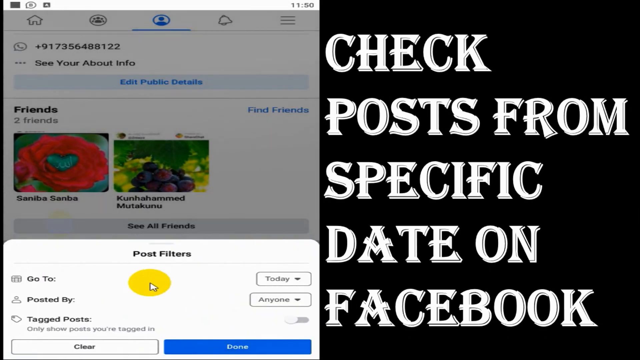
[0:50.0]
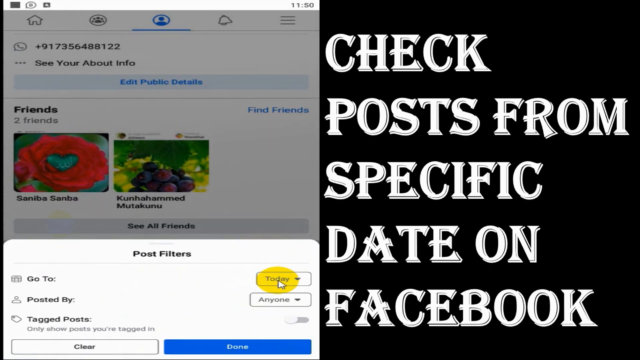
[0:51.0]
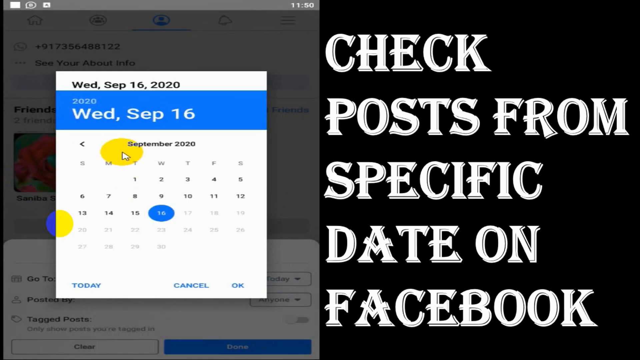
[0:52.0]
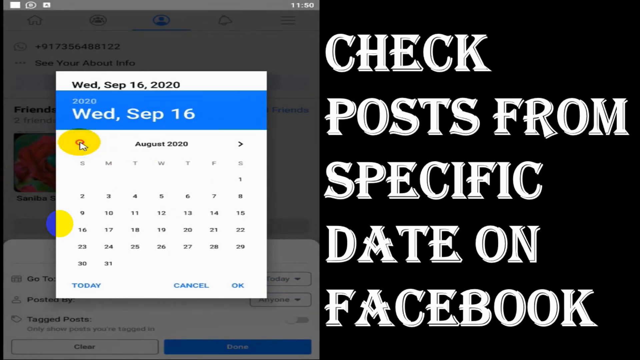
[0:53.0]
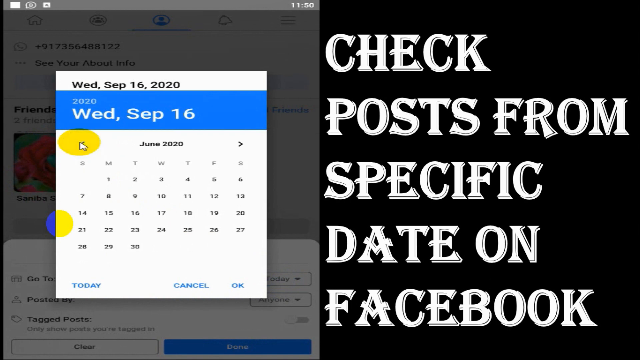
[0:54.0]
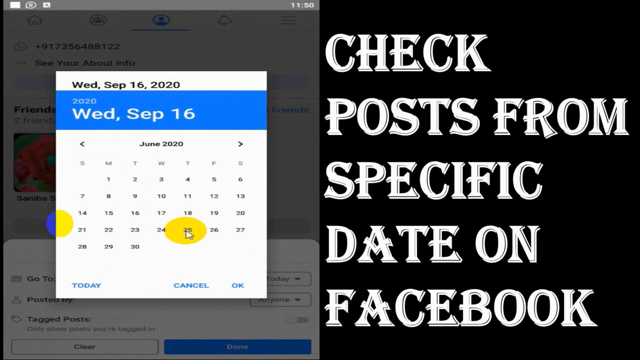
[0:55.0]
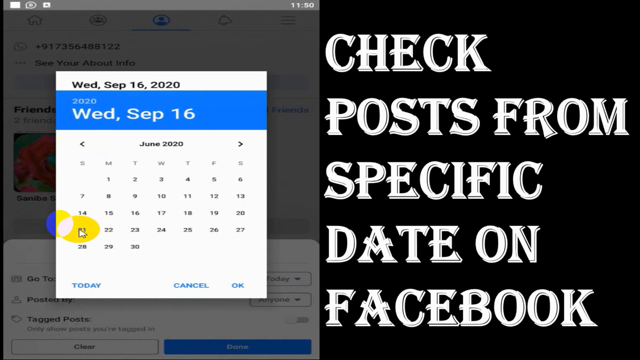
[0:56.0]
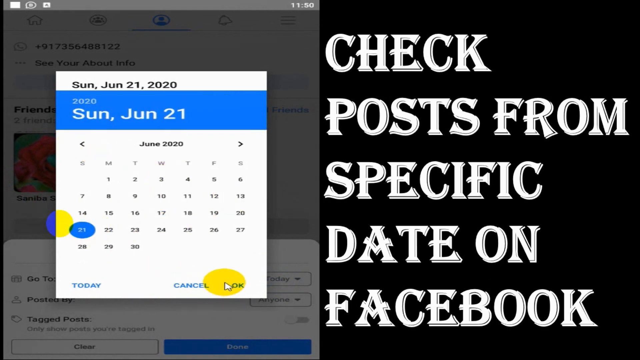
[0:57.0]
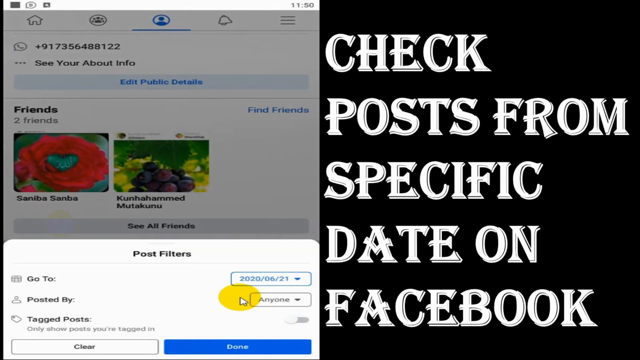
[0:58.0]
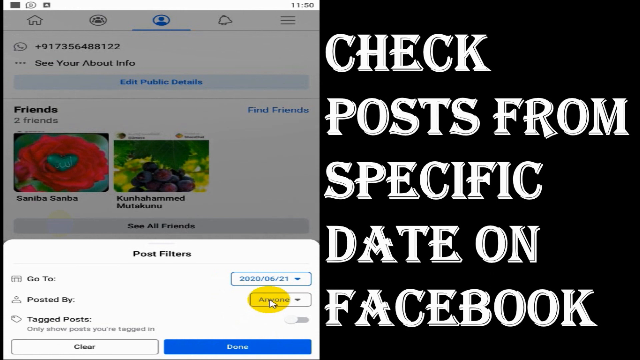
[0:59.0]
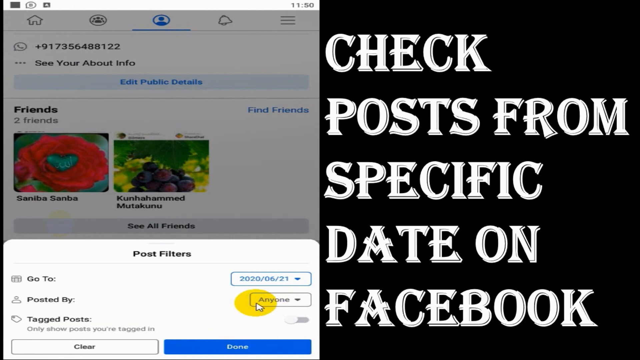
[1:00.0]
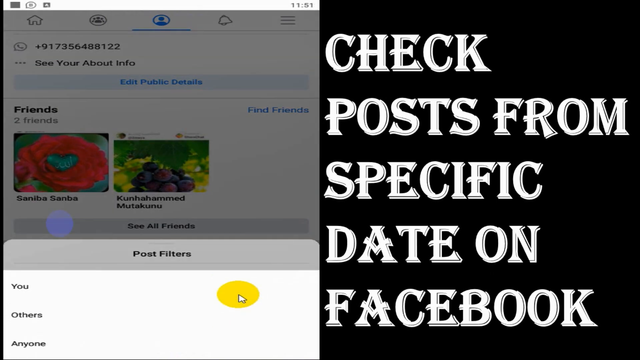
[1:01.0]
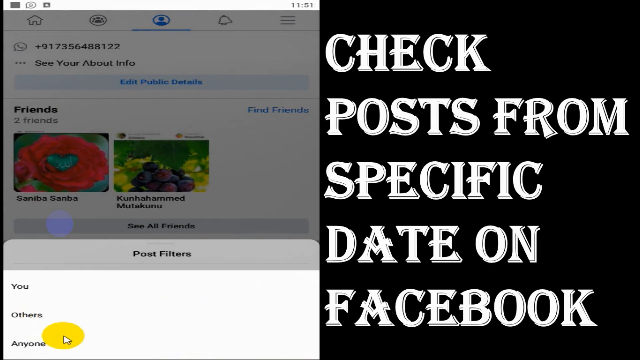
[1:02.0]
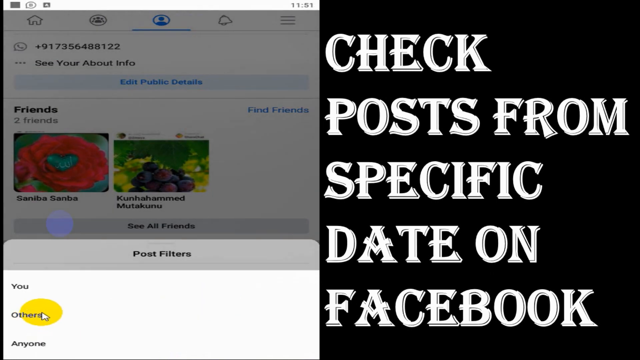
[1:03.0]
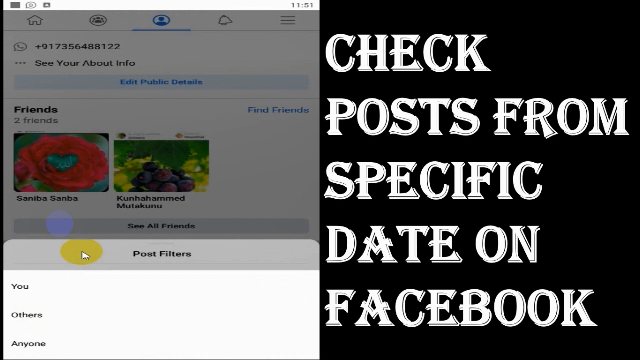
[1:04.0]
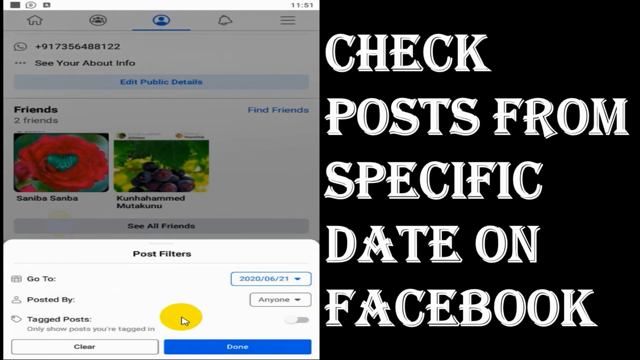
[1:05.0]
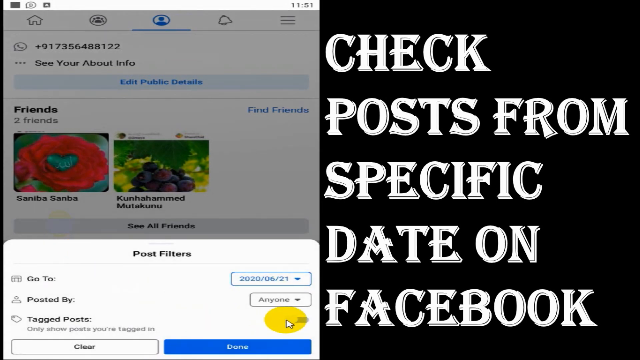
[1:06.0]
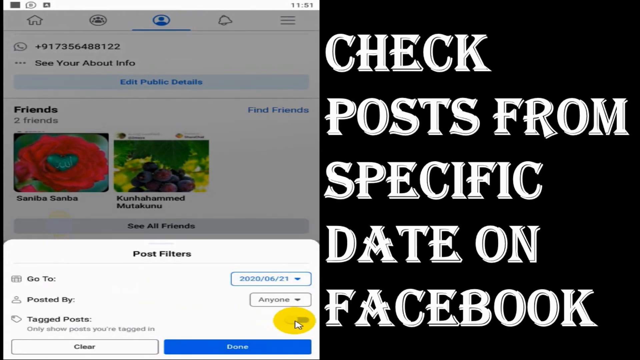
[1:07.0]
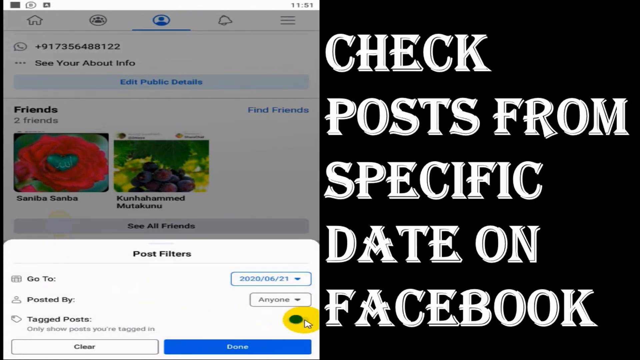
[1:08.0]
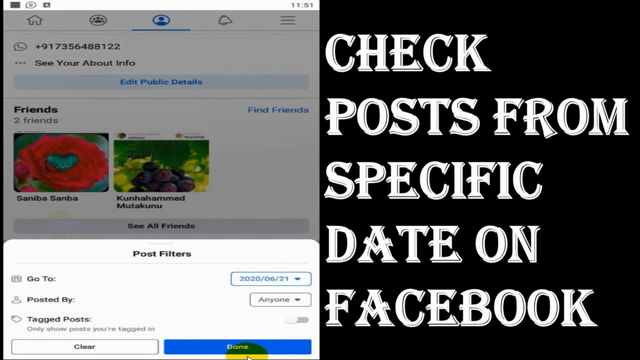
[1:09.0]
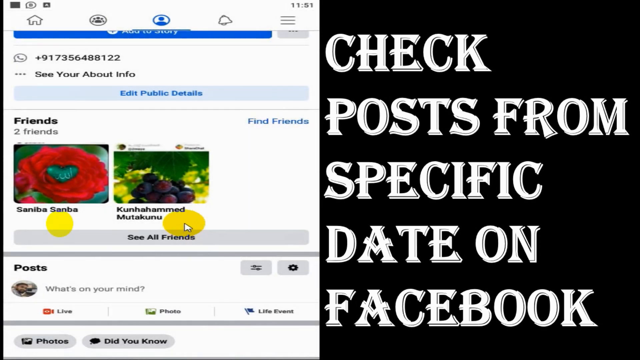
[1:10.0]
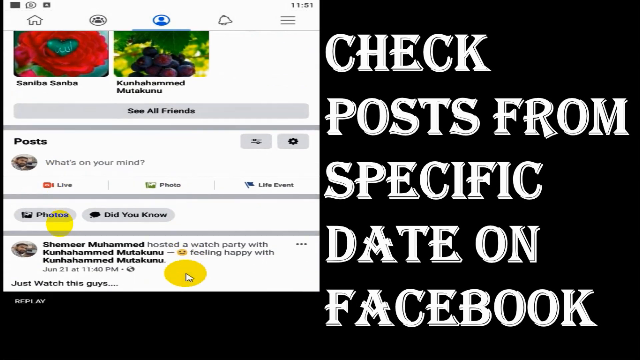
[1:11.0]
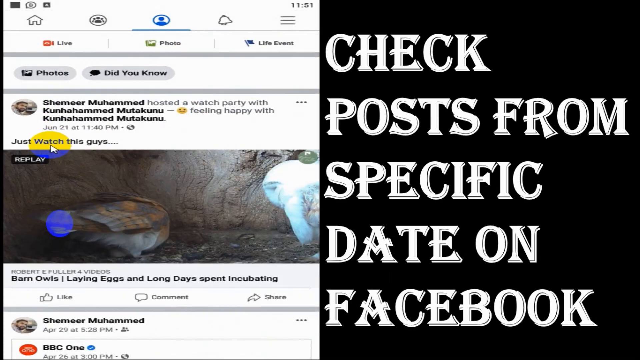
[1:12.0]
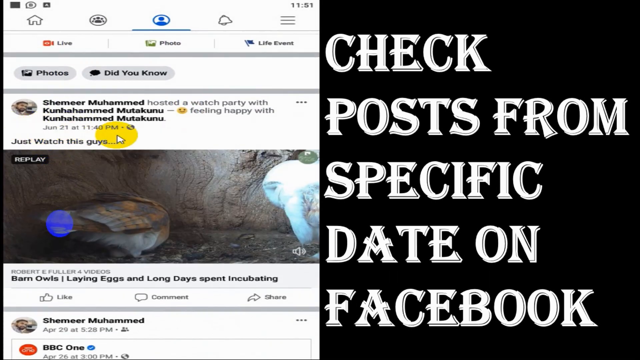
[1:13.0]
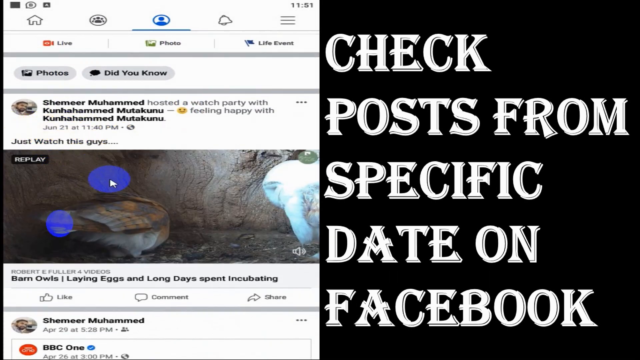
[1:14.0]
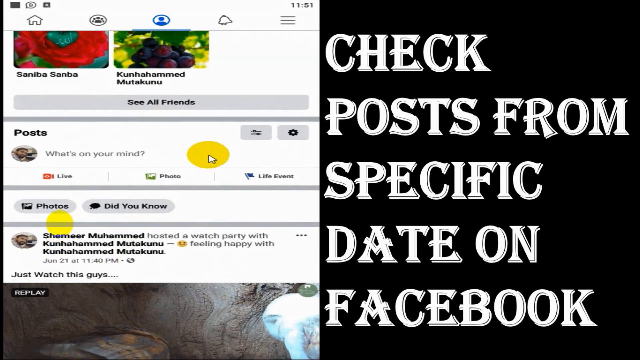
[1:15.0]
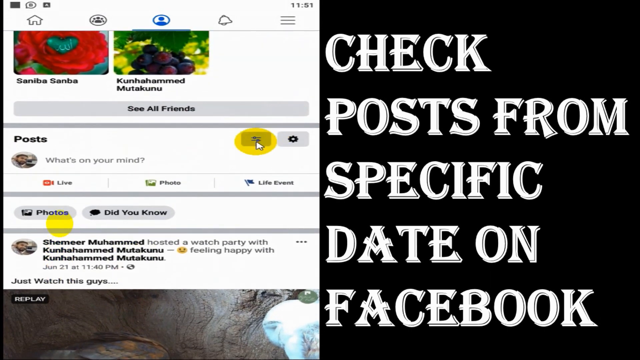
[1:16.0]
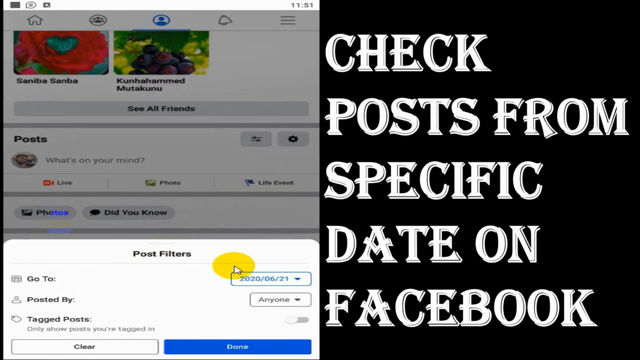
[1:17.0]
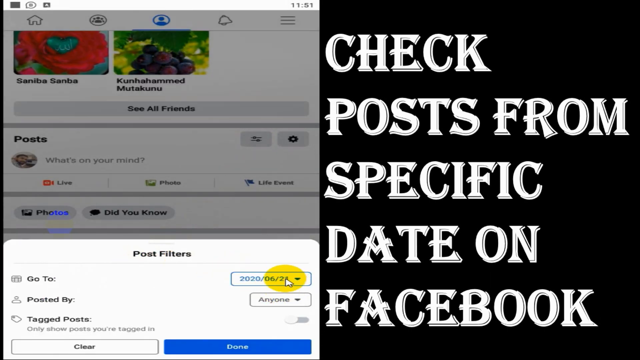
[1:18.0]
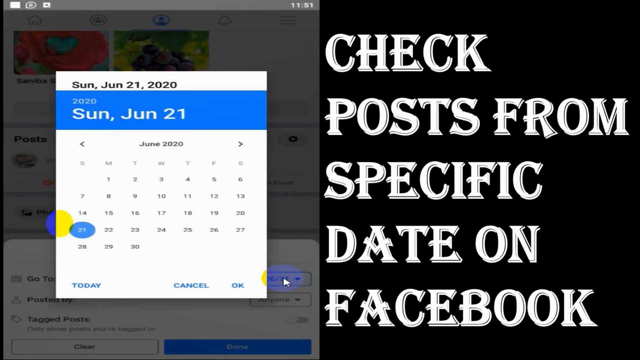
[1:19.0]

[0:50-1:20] Facebook is on the left and the words "Check Posts from Specific Date on Facebook" are on the right. A cursor highlighted in yellow hovers over a pop-up window that says Post Filters. It moves over a button on the right side of the Facebook window that says Today and clicks, bringing up a calendar that says Wednesday, September the 16th. A left-facing arrow is clicked to go to August 2020, then clicked a few more times until June 2020 is shown. The cursor hovers over the 21st and clicks, making a blue circle appear, then clicks OK at the bottom. The cursor hovers over the word Anyone, moves down and back up to Anyone, then hovers over the word Others without selecting it. The cursor clicks off that window to make it go away, returning to the Post Filters screen. The toggle for tagged posts is clicked, followed by the Done button. The page is scrolled, and the cursor highlights the date under one of the posts. The page is scrolled back up, the hamburger button for the posts area is clicked again, and the Post Filters pop-up appears. The cursor hovers over the date in Post Filters, the calendar is brought up again, and the selected date is changed to the 22nd.